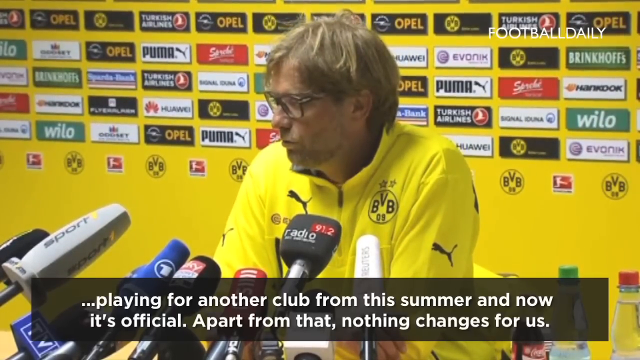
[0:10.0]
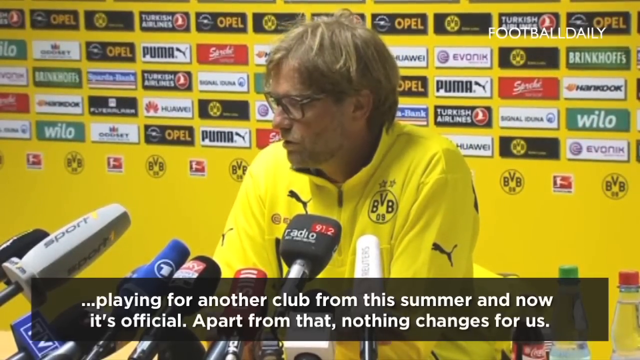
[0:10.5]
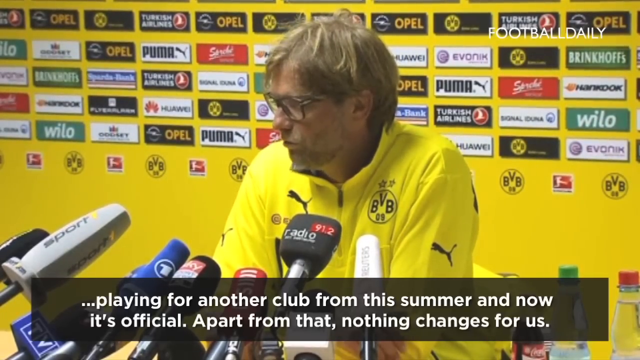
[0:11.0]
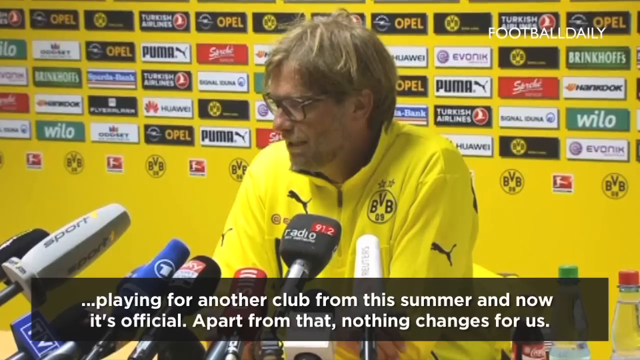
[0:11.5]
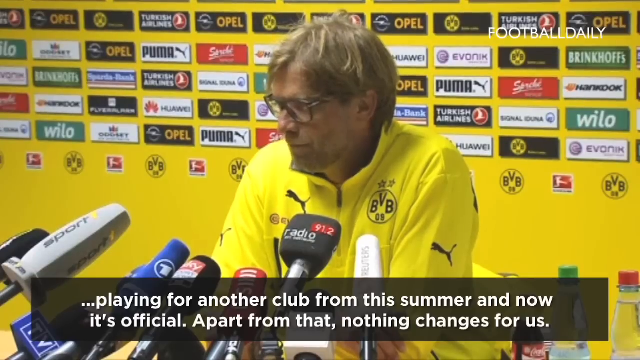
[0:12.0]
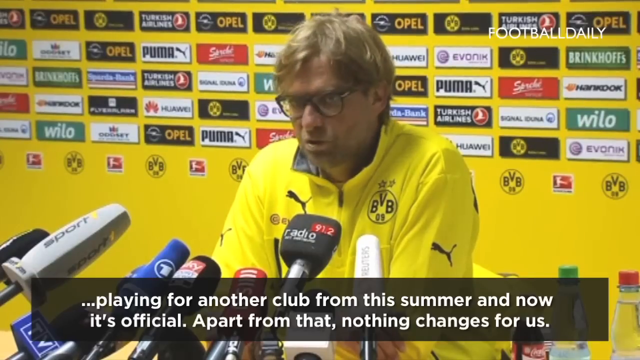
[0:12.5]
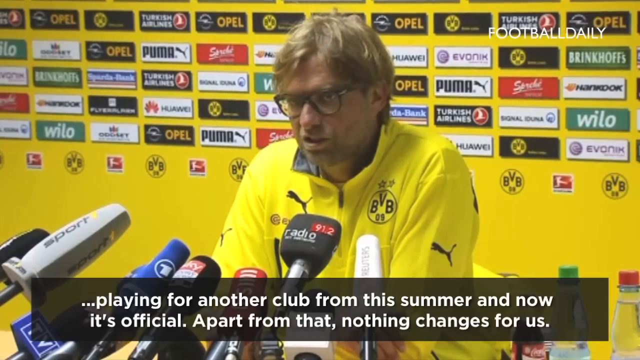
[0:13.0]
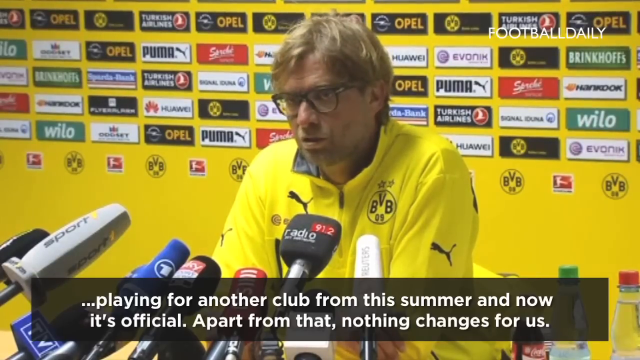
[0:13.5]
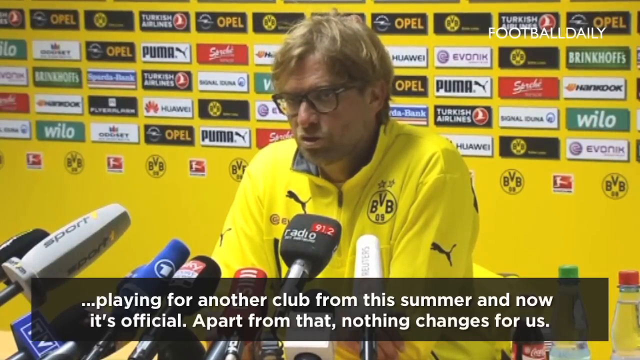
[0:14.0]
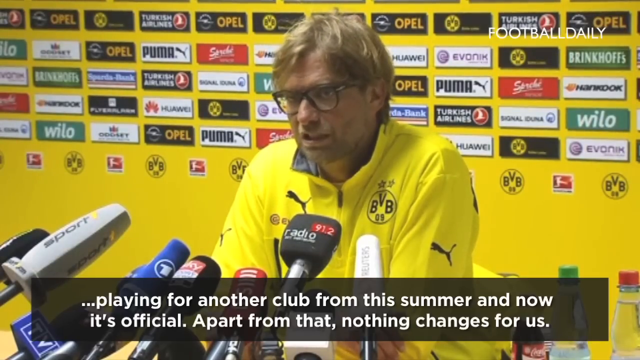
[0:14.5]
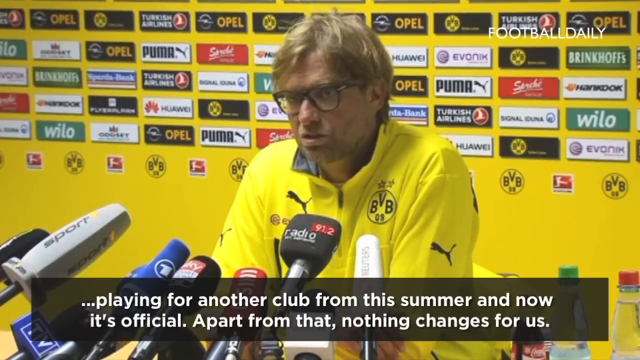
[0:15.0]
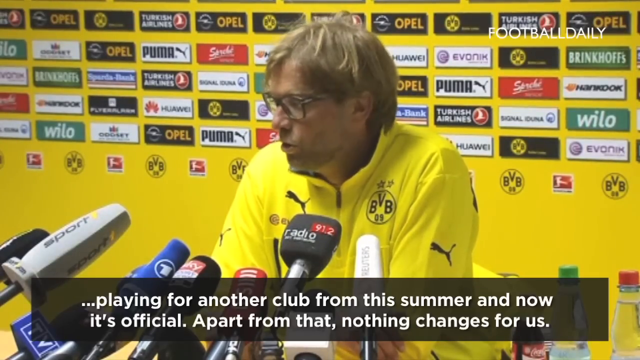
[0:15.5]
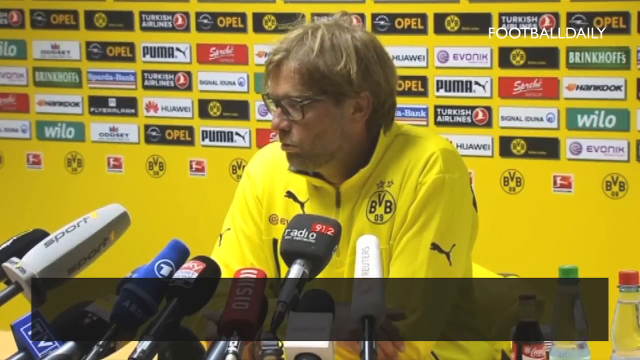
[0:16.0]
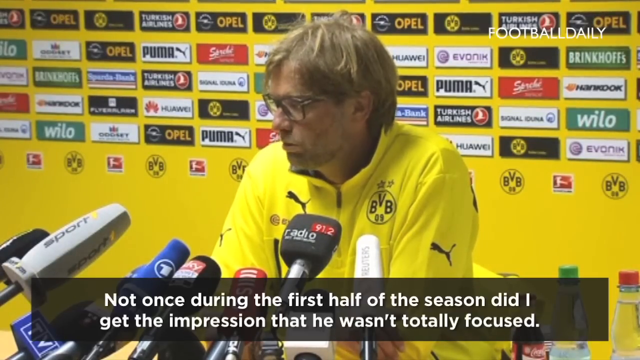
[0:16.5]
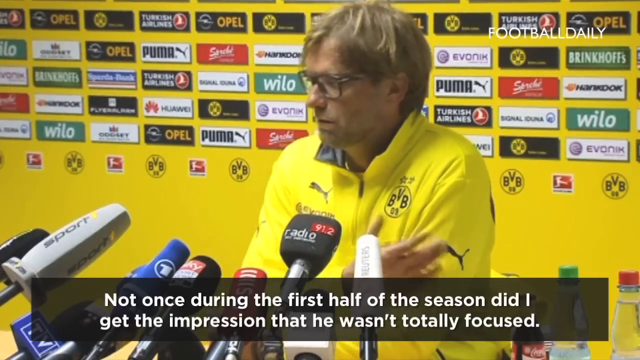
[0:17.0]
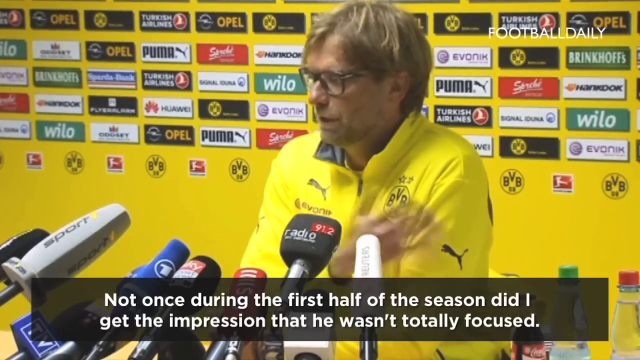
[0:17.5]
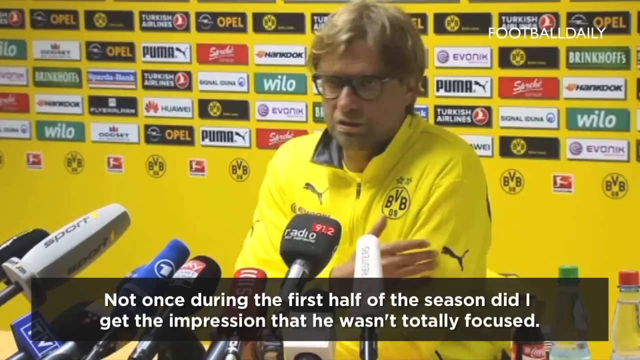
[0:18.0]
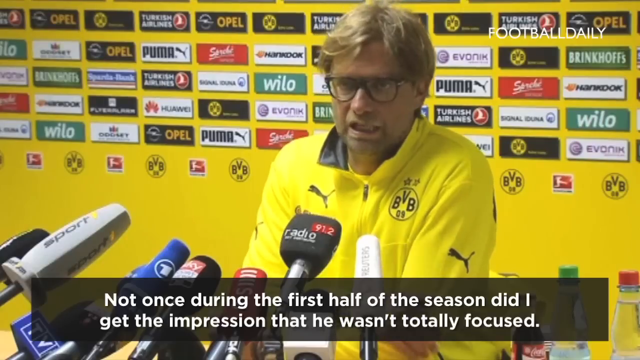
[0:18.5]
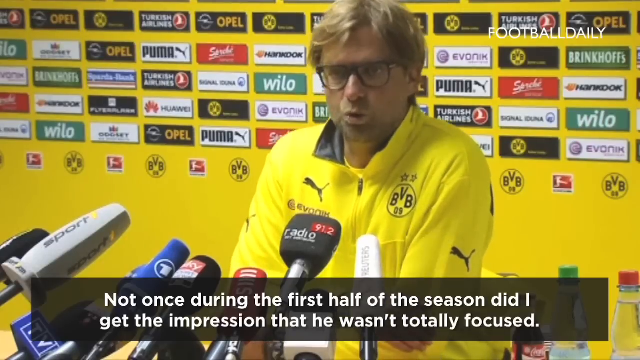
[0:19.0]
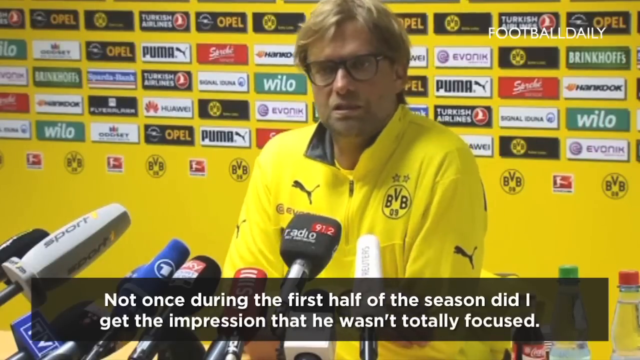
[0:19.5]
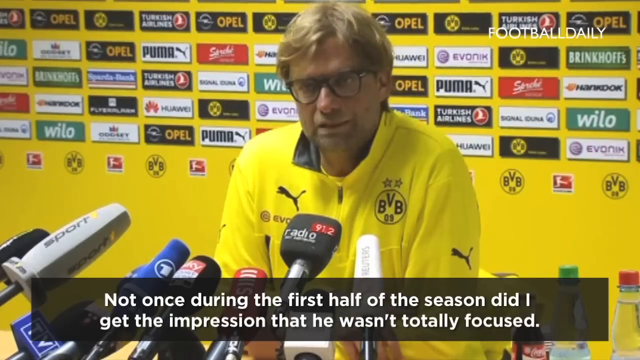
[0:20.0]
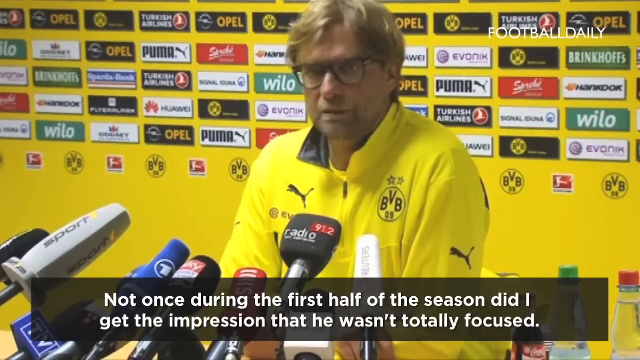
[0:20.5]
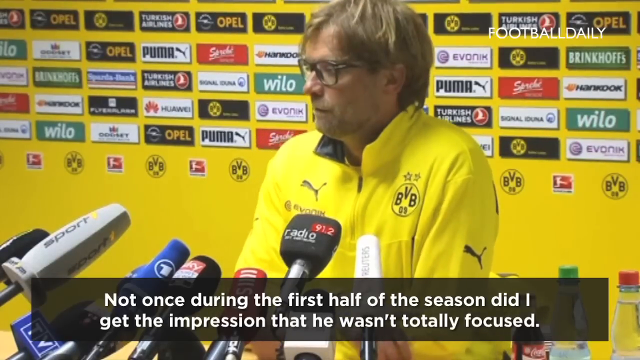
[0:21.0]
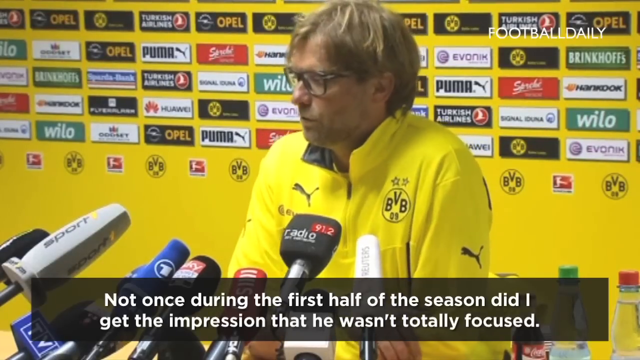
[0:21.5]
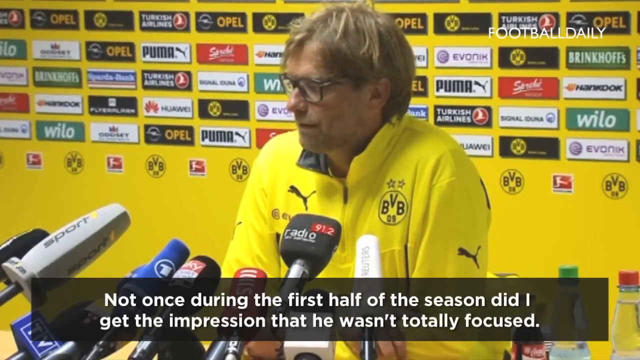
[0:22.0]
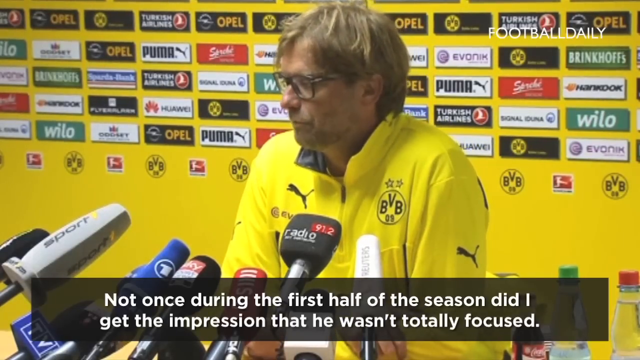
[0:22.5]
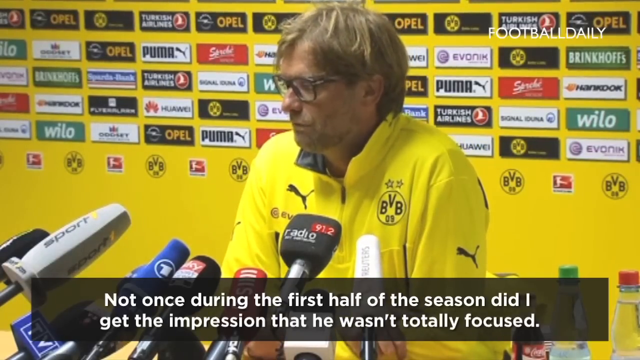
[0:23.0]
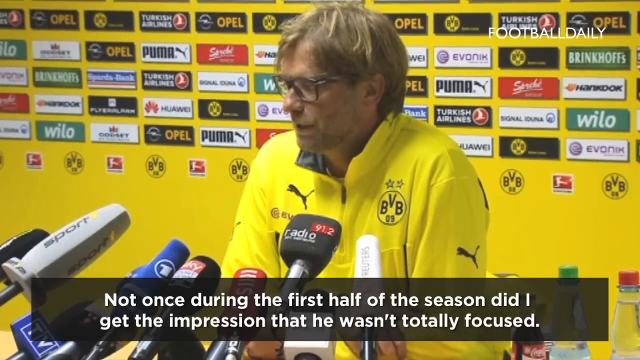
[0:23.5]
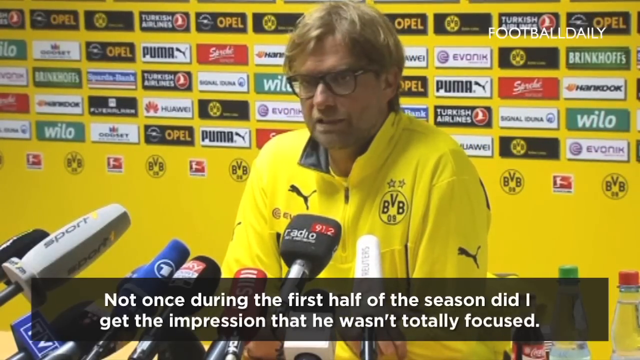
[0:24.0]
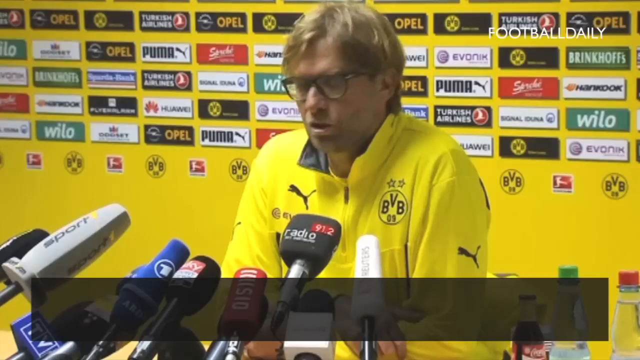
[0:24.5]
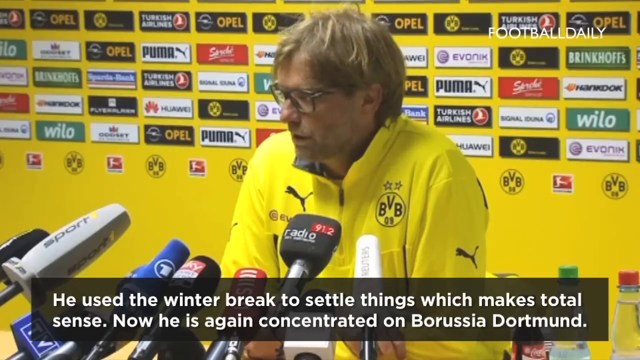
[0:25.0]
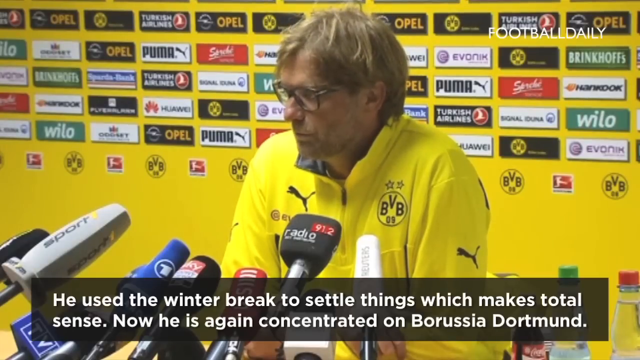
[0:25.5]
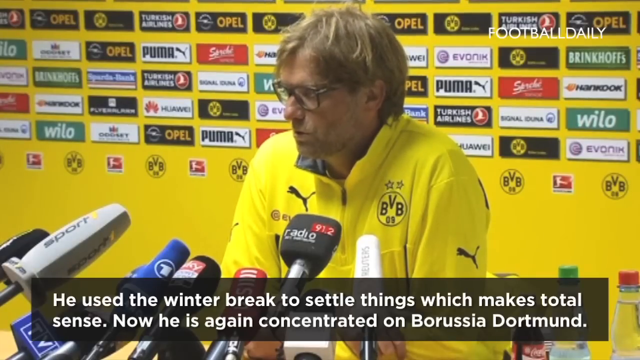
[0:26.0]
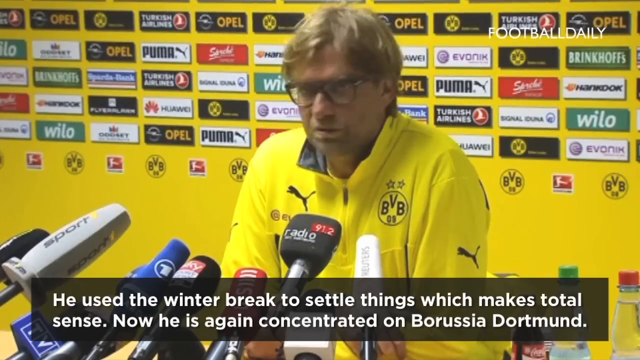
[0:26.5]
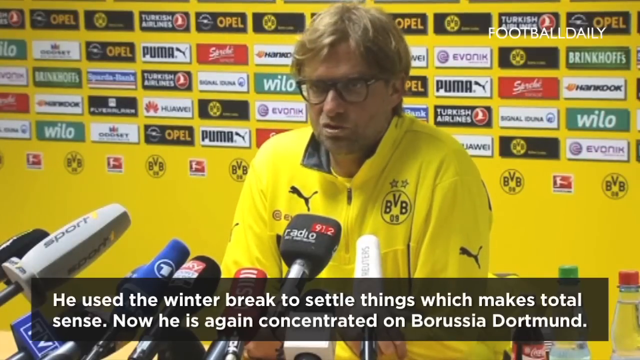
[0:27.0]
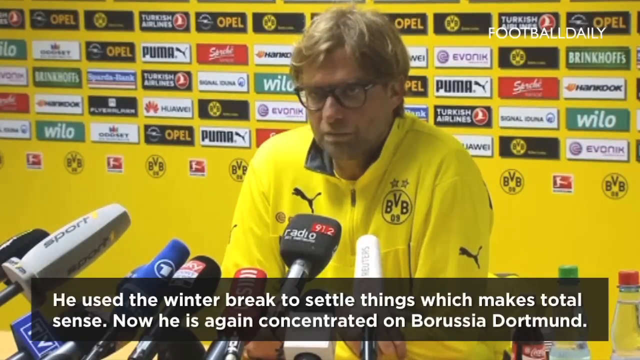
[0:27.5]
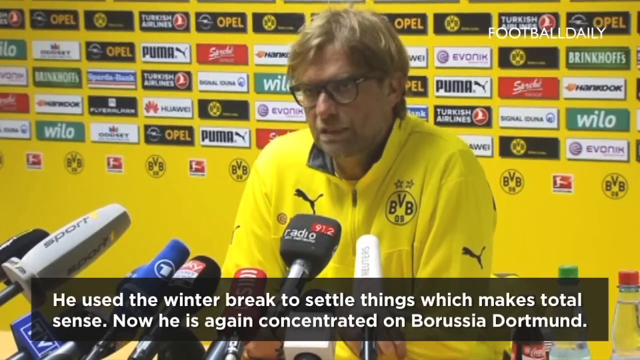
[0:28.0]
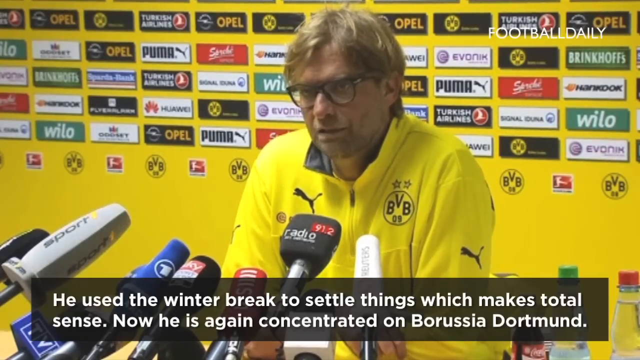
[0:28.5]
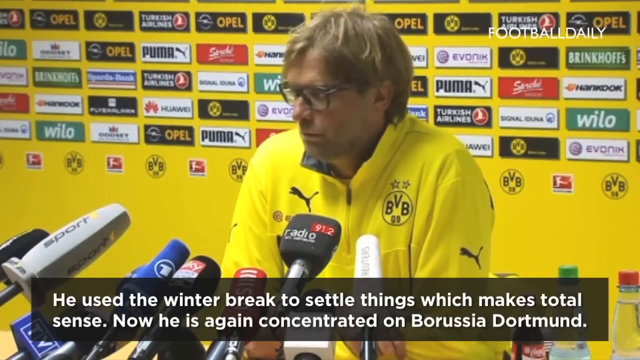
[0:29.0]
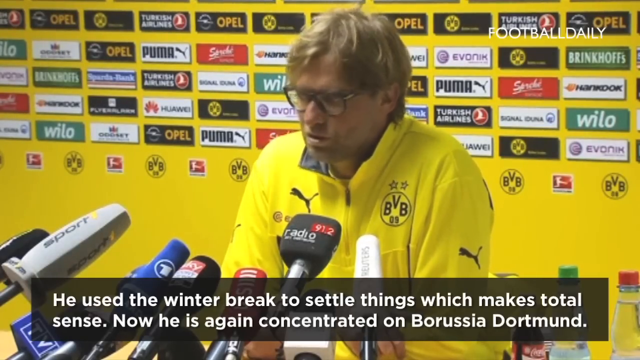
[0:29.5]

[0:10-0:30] A middle-aged Caucasian man with sandy blonde hair, square black glasses and a yellow and black jacket stands in front of a reporter's podium lined with microphones from left to right, each bearing a different logo or emblem. He looks toward the left side of the frame and speaks at a relatively slow pace, while text transcripts at the bottom of the video narrate what he is saying. A large number of advertising emblems cover the entire top section of the back wall. As he speaks he looks out at the crowd, looking back toward his left and right as if to include the entire crowd in his response. He taps his left arm with his hand, his body language appearing to communicate disappointment or irritation. He seems uncomfortable, shrugging his shoulders and moving his head back and forth, and he keeps talking the whole time. Cameras flash on his face and the back wall as he continues speaking.